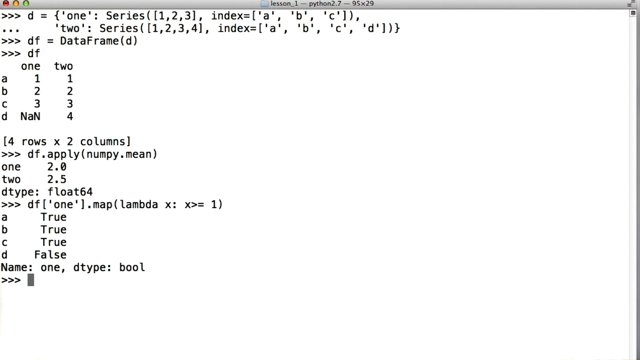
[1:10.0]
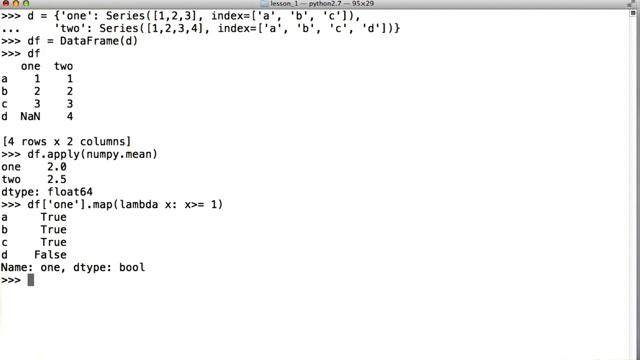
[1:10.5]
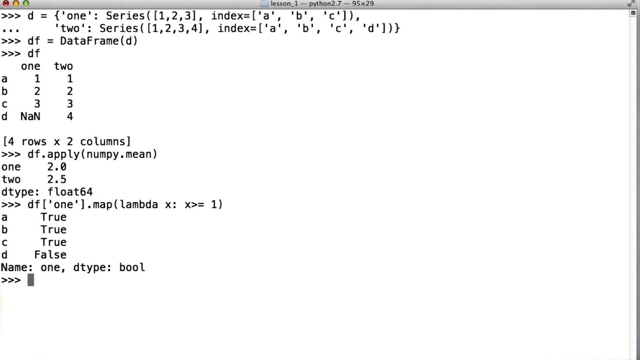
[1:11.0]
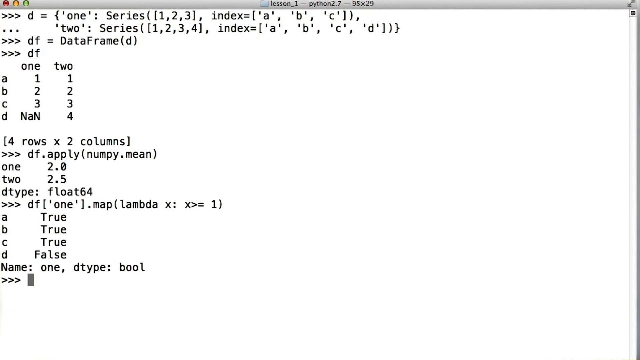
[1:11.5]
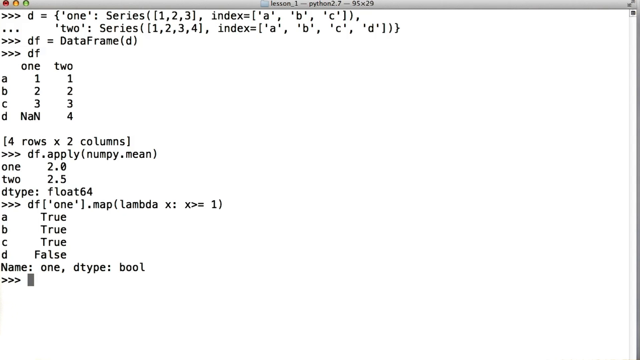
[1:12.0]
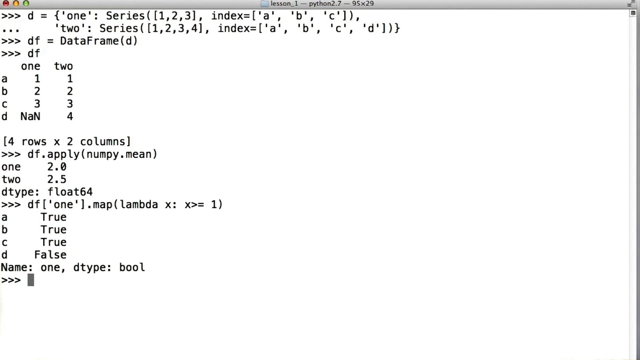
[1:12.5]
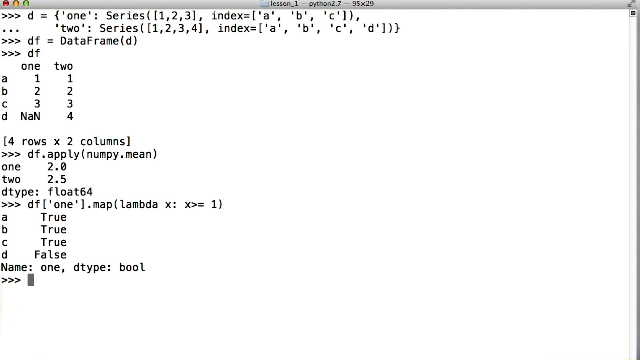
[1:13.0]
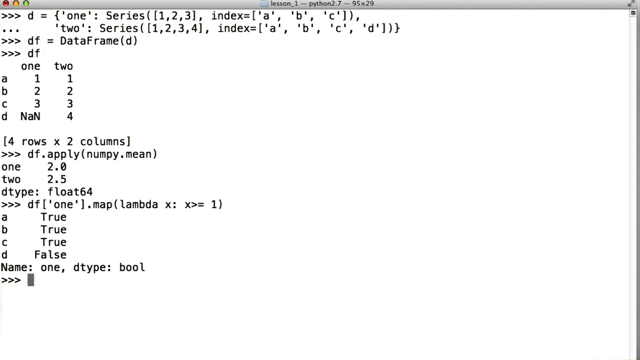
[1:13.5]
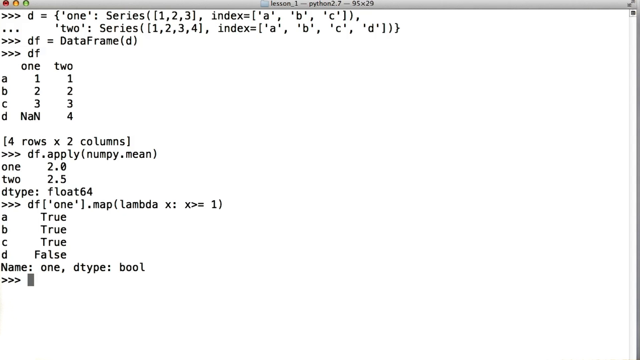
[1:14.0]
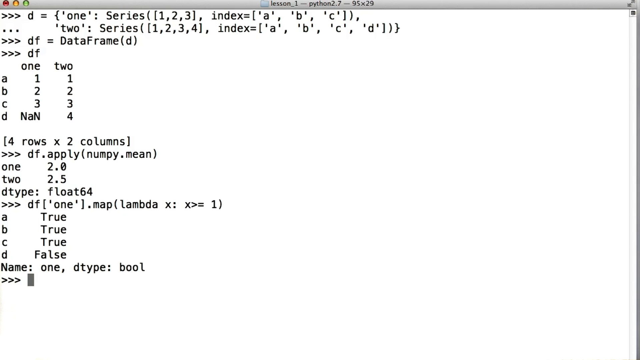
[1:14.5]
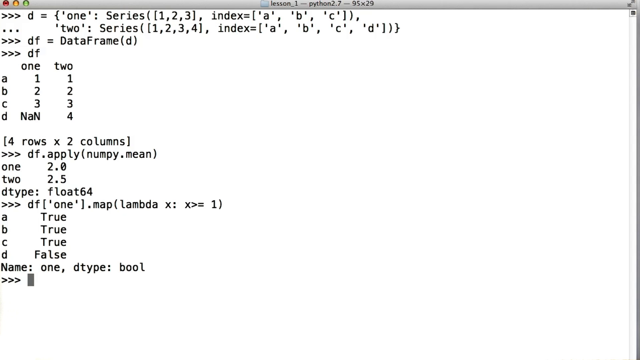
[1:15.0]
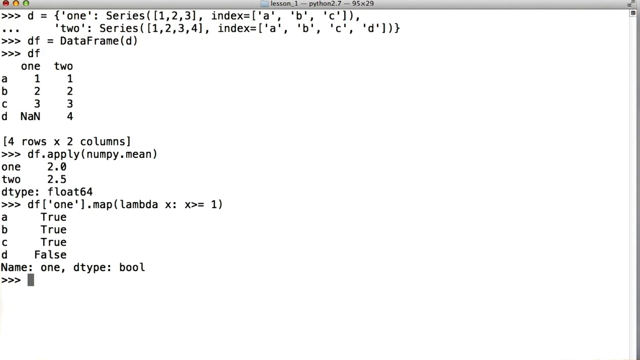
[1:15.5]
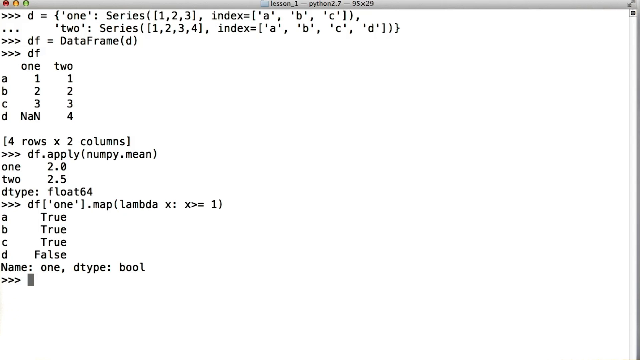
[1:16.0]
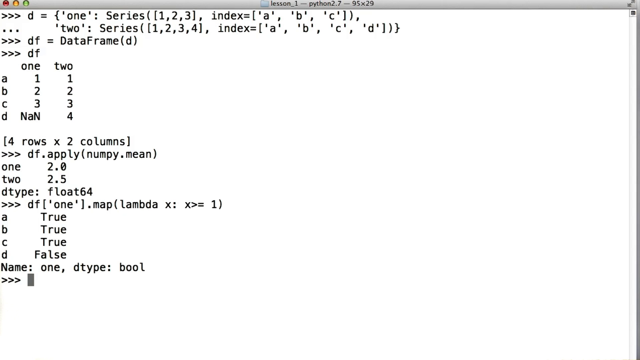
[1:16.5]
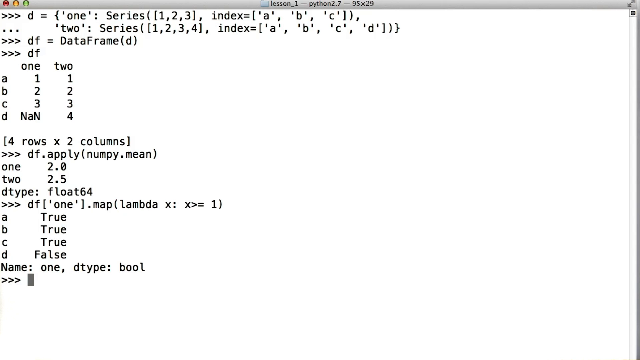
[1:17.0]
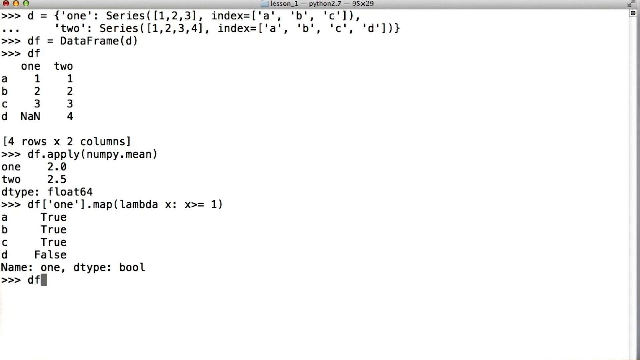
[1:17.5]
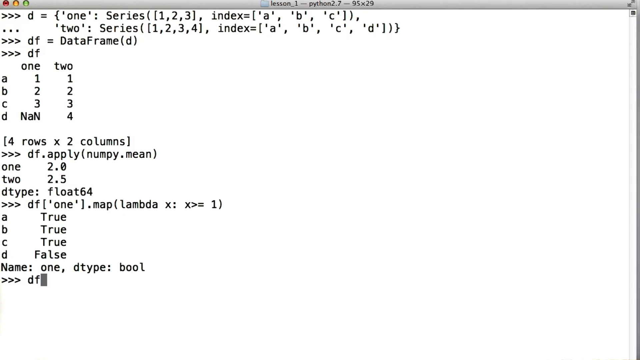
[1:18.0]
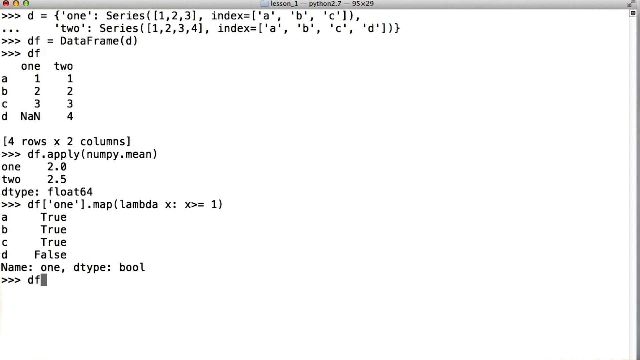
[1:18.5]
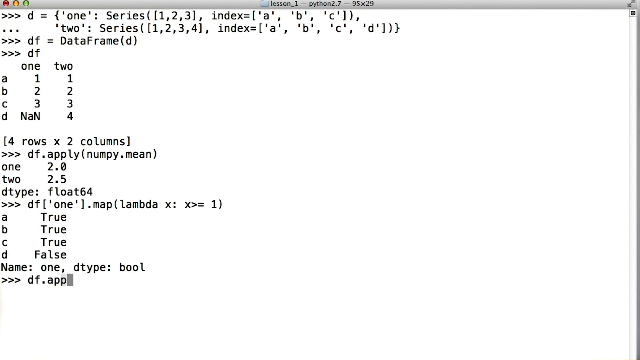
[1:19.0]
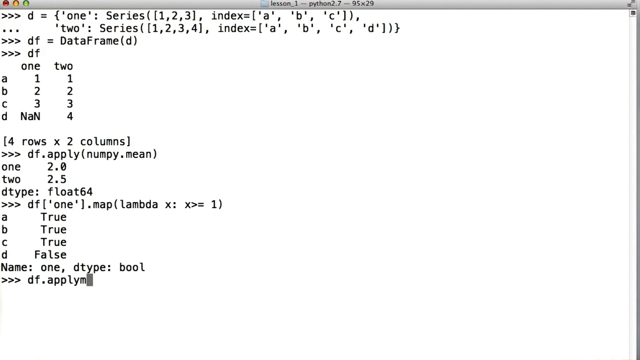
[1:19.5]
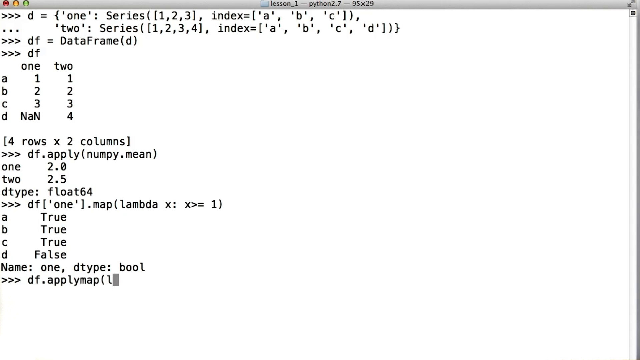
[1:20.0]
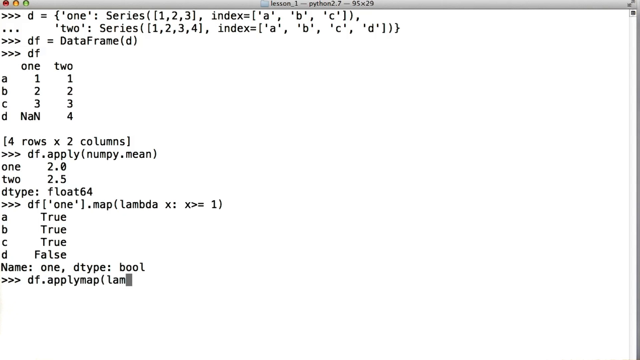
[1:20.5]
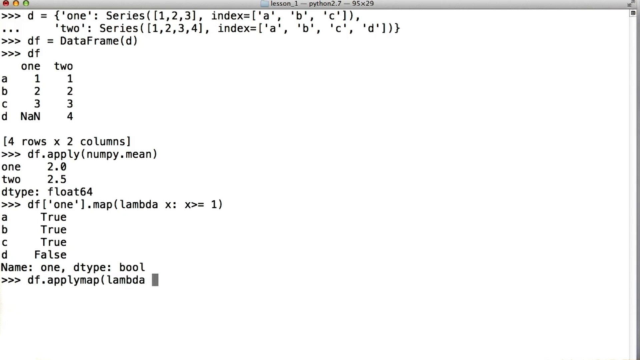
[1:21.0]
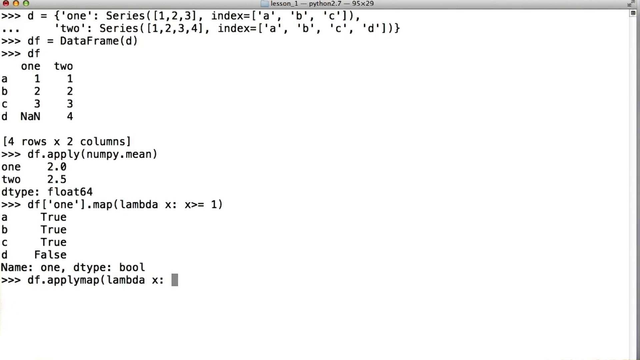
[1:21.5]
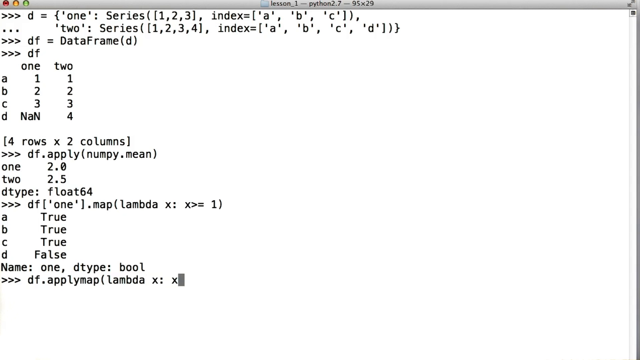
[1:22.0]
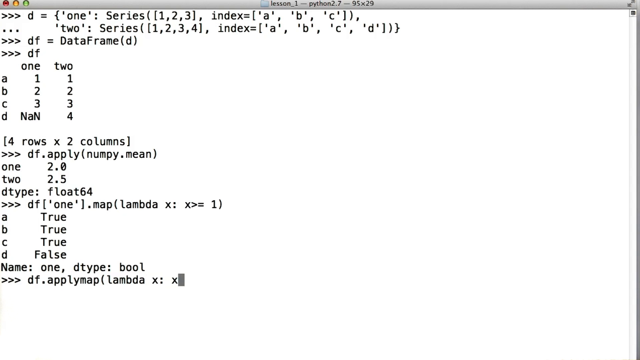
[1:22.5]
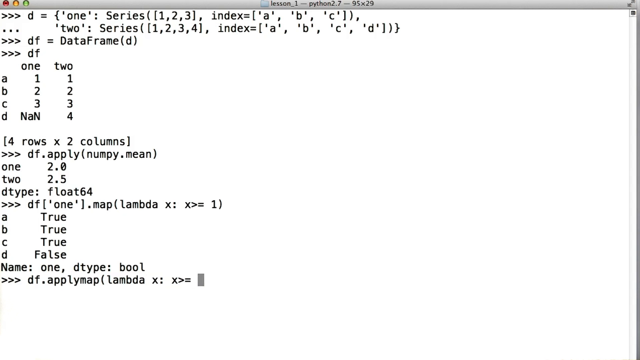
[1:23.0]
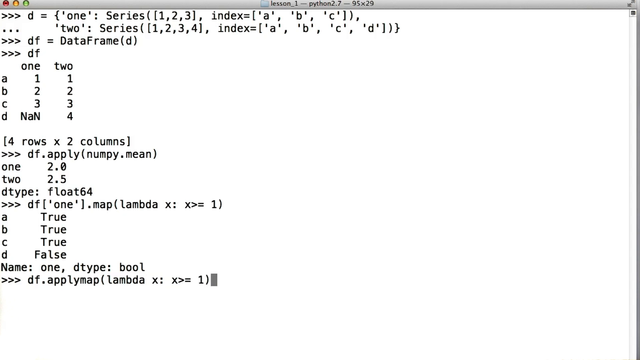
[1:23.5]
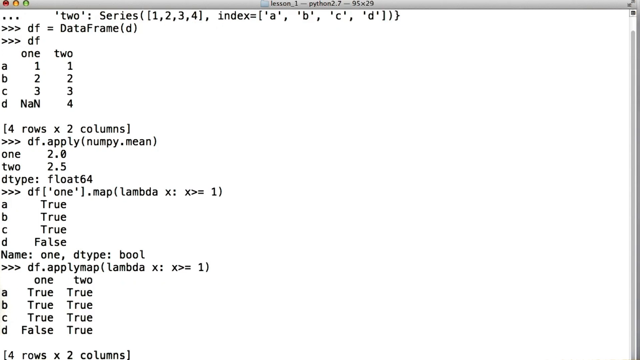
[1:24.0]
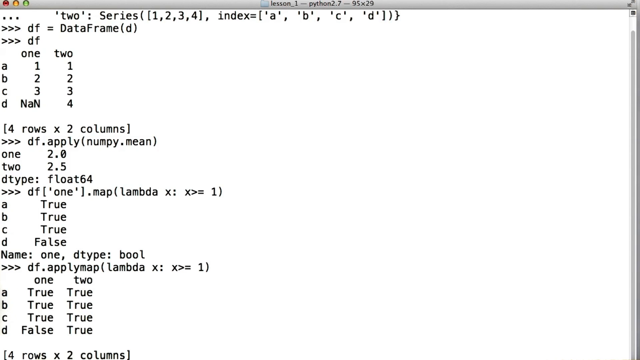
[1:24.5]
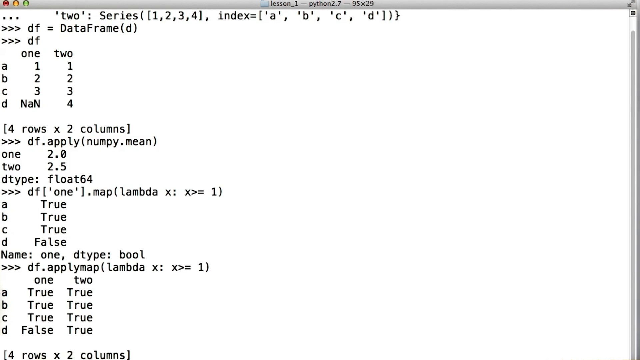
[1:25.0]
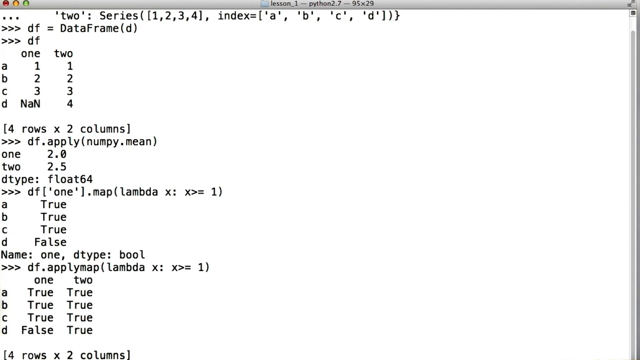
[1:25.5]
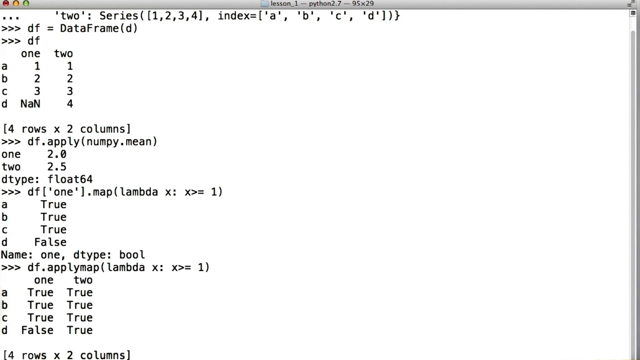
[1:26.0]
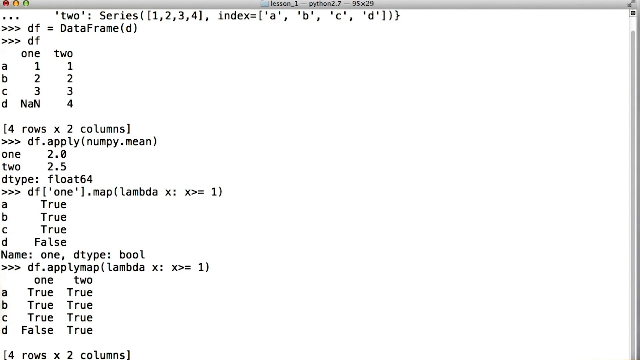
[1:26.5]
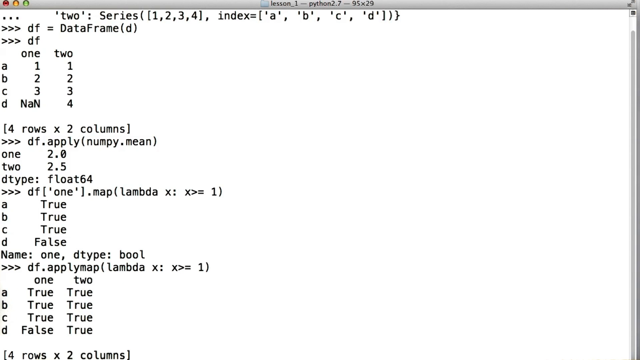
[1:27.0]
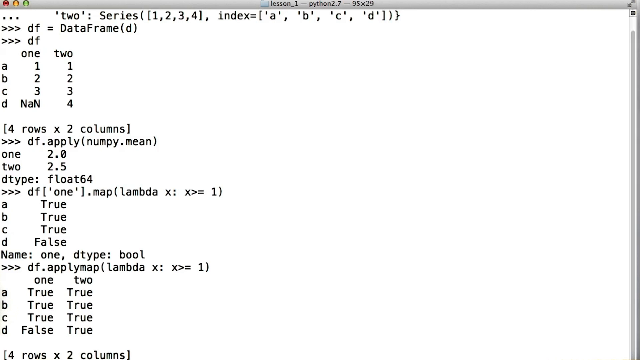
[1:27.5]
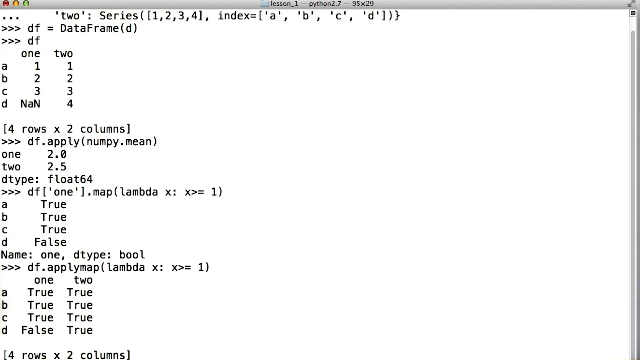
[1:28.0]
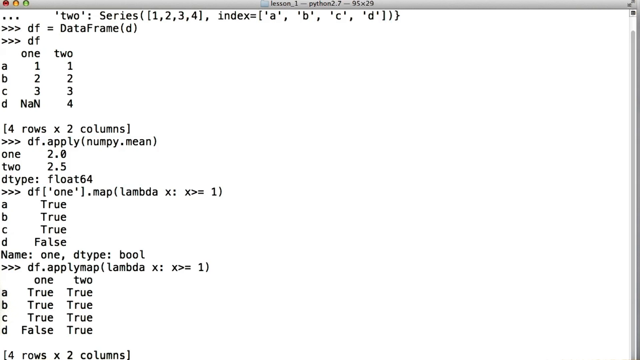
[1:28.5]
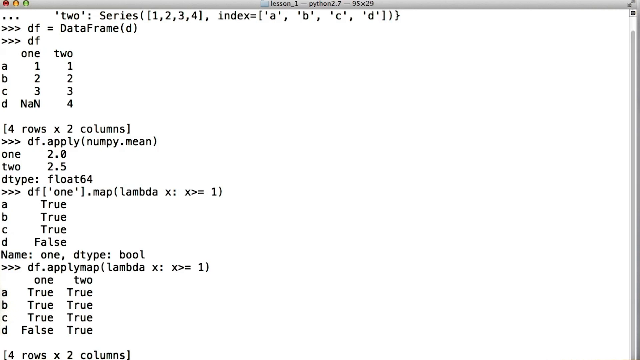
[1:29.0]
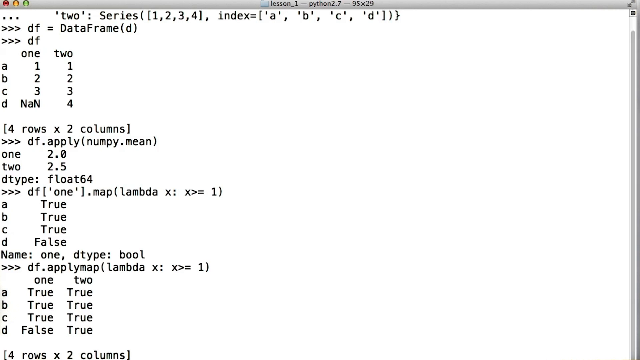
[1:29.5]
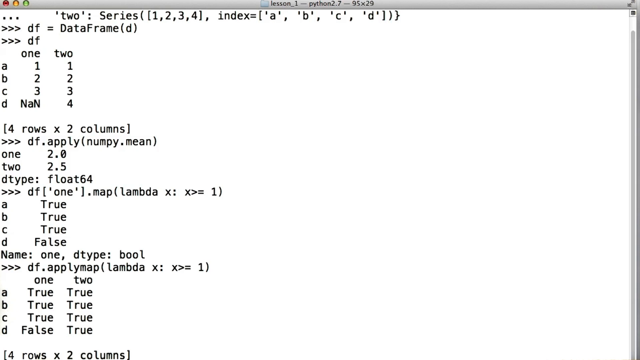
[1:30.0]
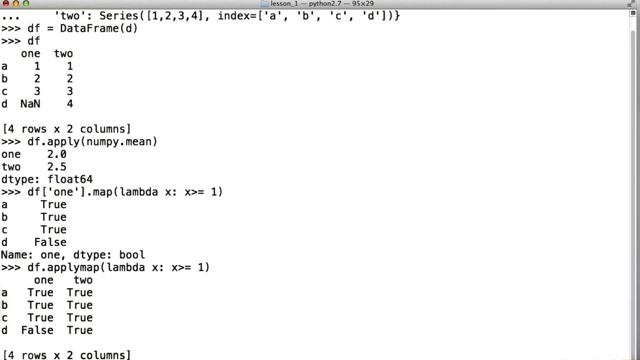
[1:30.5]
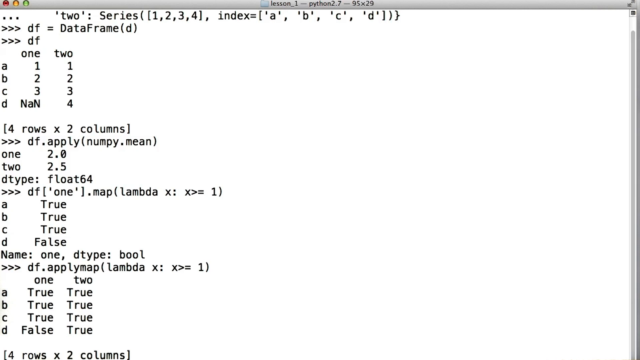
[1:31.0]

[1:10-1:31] He apparently writes another new code in a similar but different way: "df.applyMap(lambda x: x >= 1)". The output shows A True, B True, C True, and D False True. The same page with the same white background remains, with nothing else changing. This last code is where the video ends.